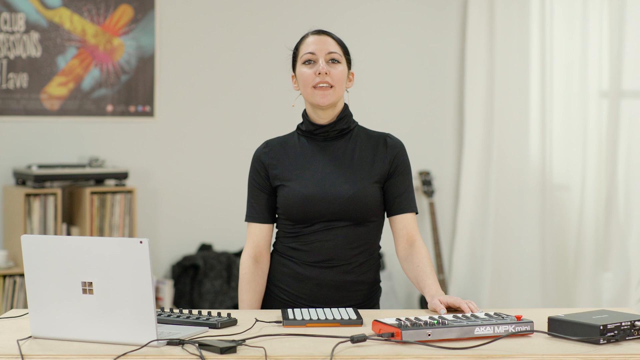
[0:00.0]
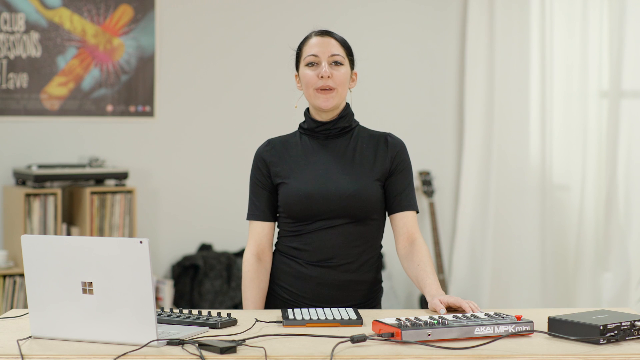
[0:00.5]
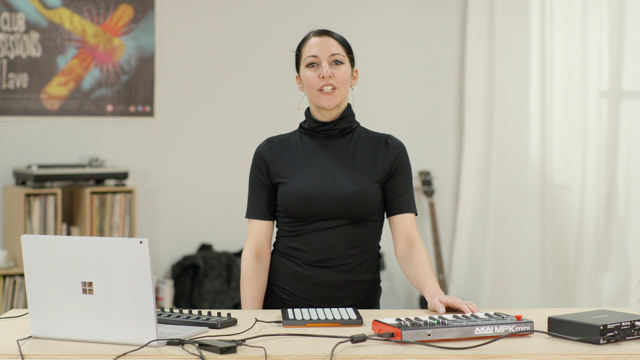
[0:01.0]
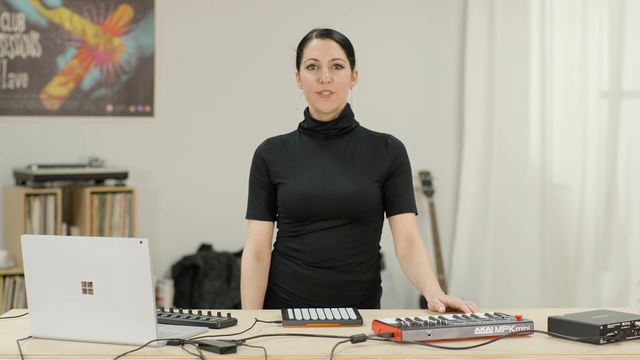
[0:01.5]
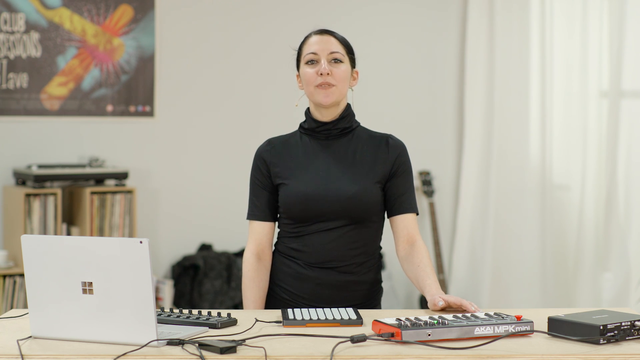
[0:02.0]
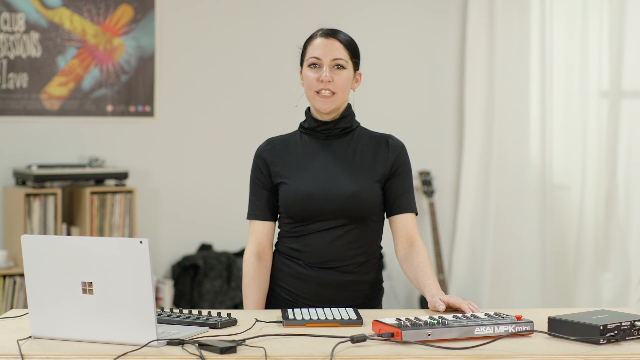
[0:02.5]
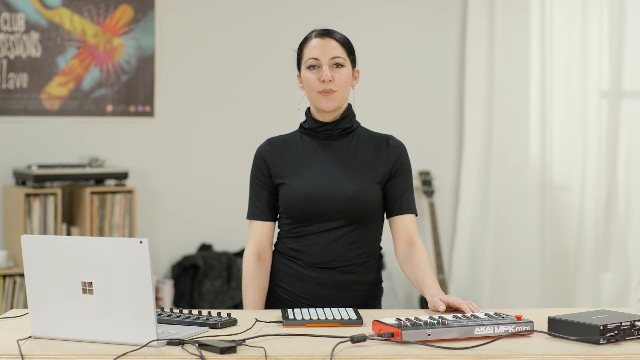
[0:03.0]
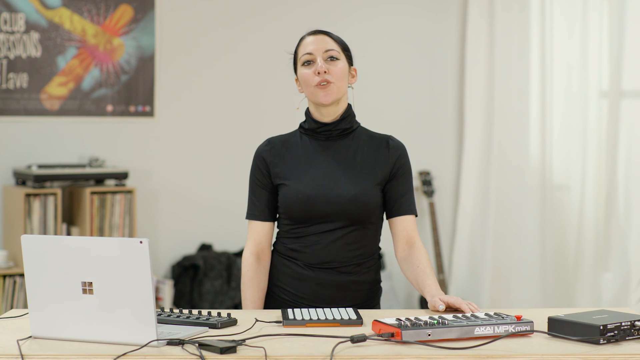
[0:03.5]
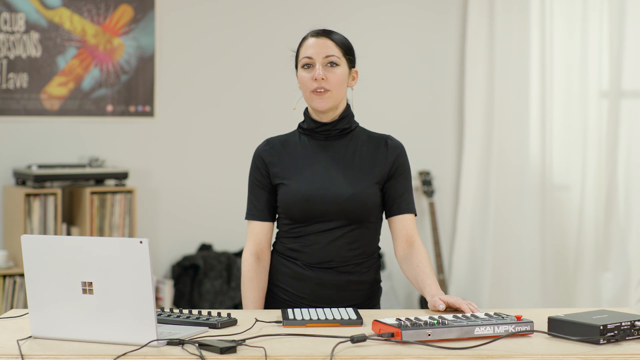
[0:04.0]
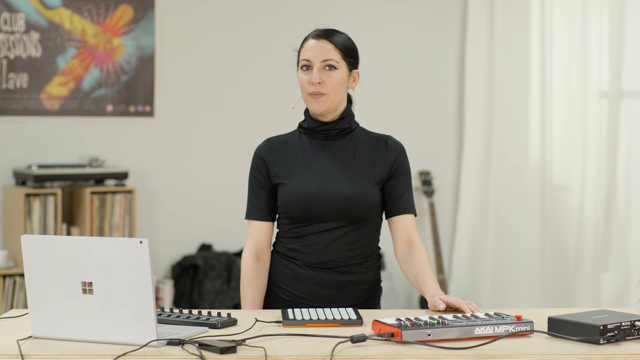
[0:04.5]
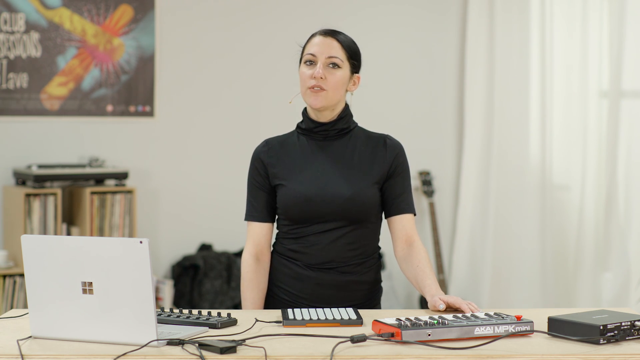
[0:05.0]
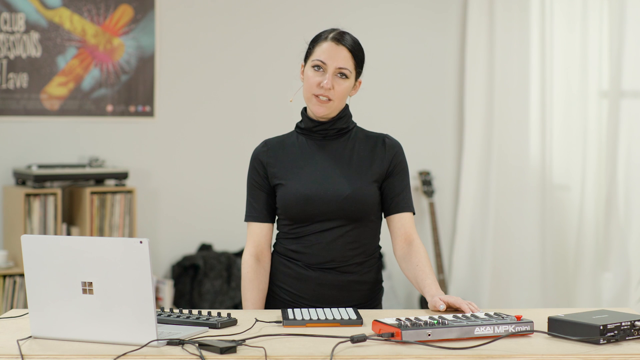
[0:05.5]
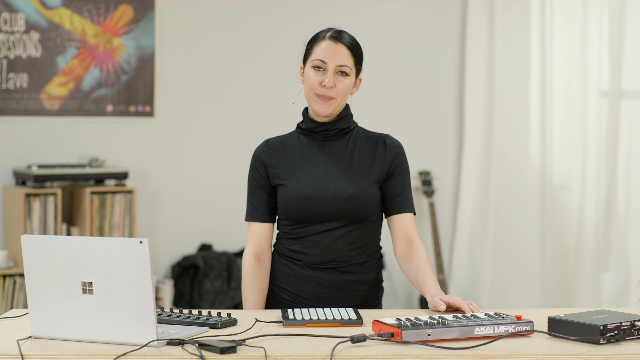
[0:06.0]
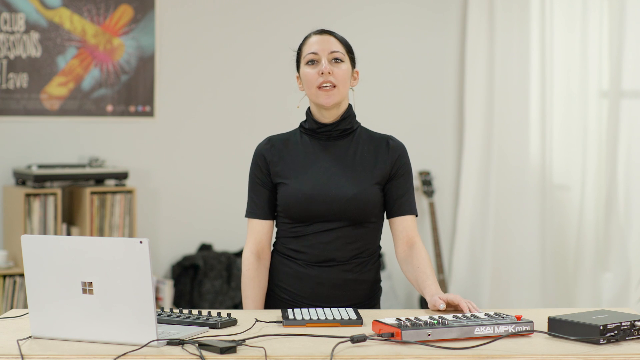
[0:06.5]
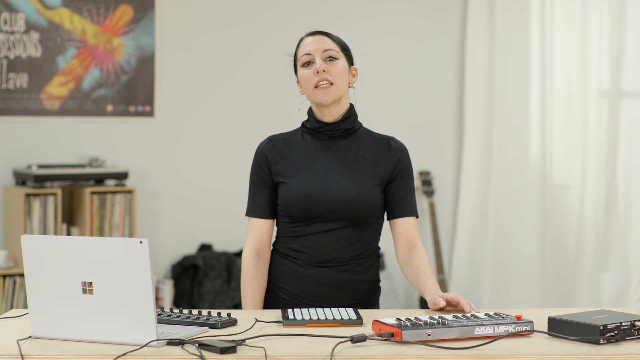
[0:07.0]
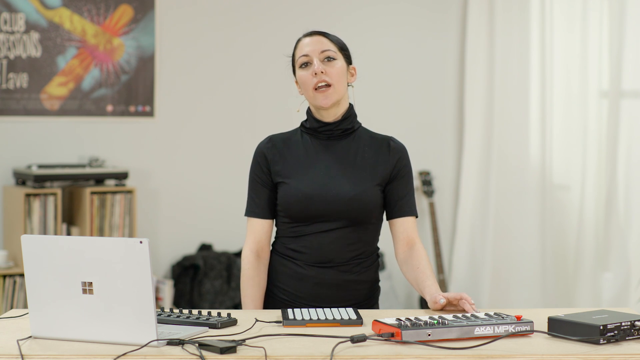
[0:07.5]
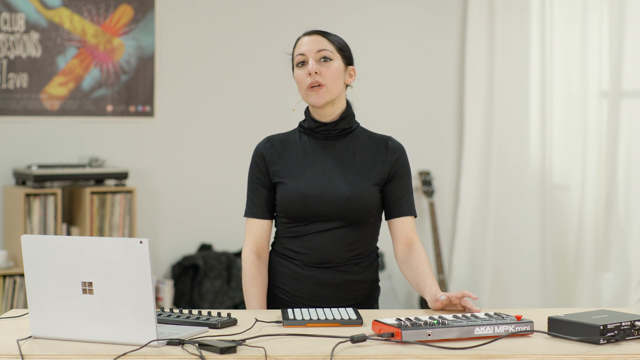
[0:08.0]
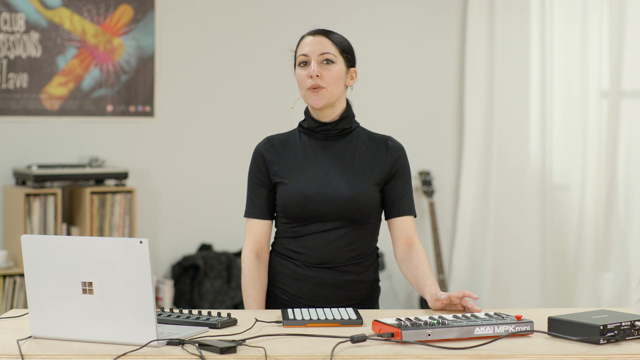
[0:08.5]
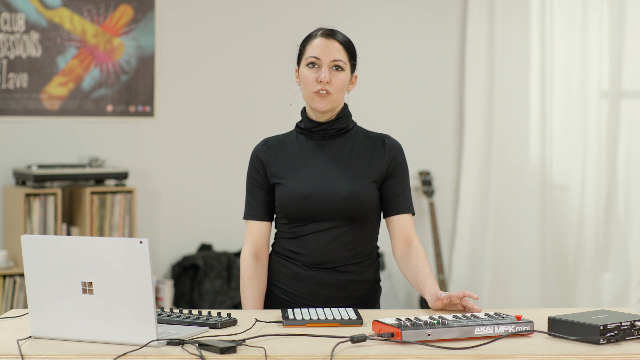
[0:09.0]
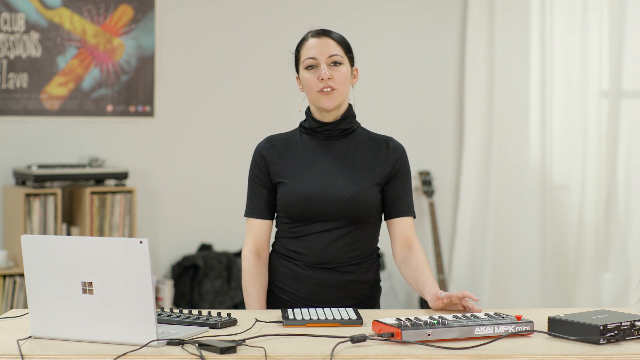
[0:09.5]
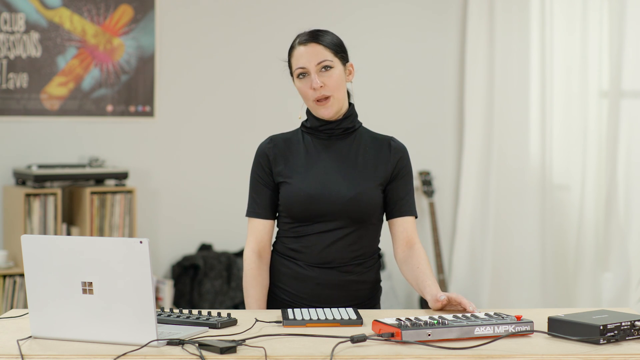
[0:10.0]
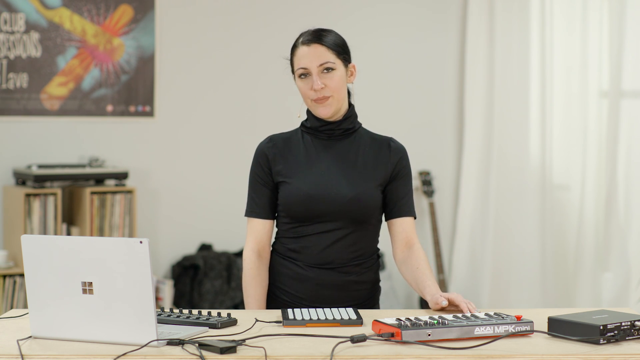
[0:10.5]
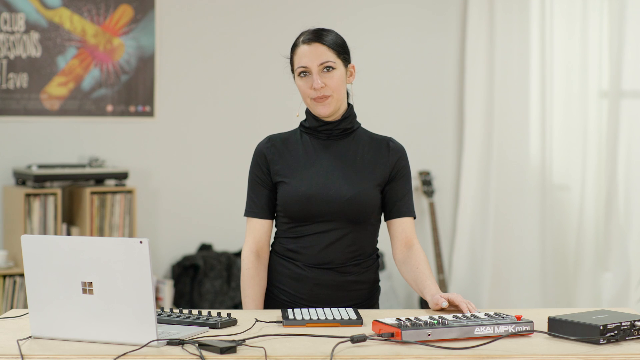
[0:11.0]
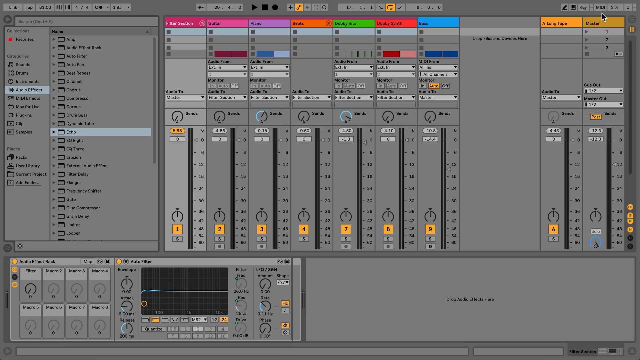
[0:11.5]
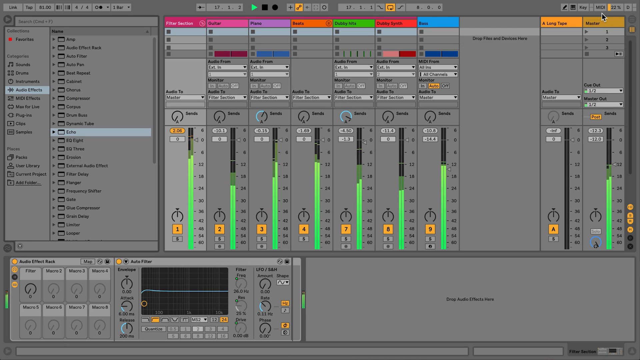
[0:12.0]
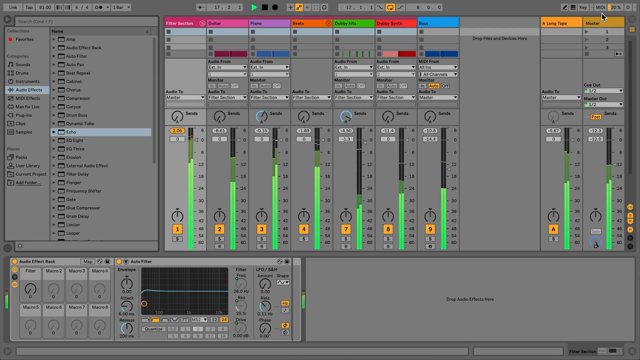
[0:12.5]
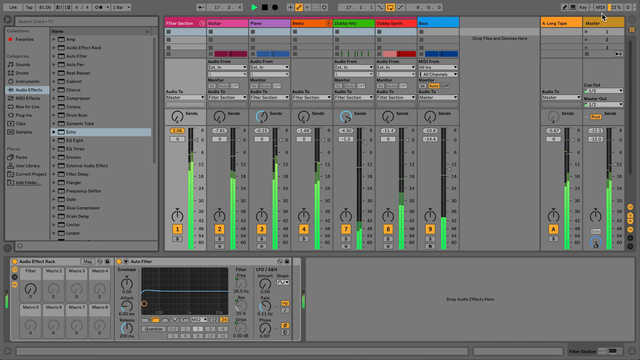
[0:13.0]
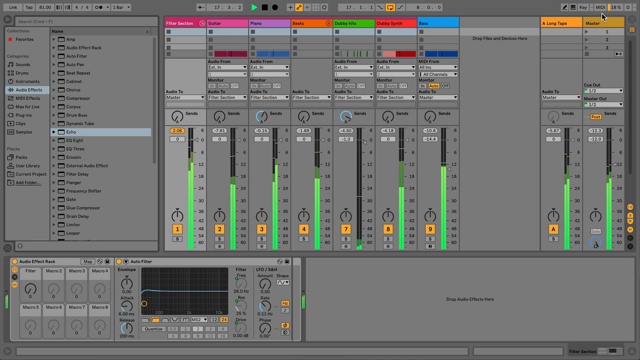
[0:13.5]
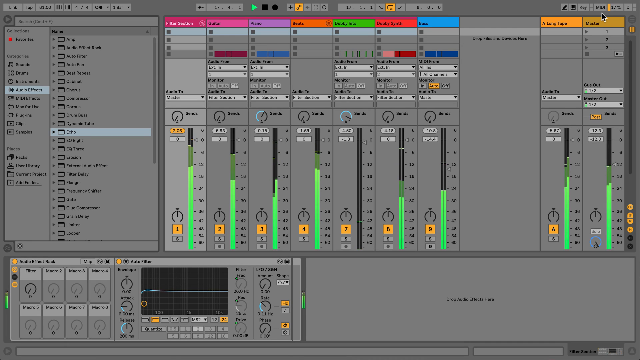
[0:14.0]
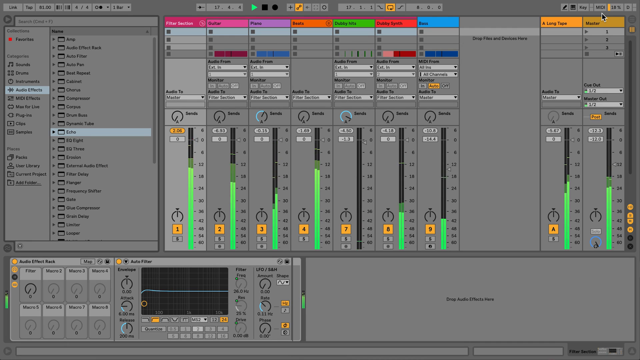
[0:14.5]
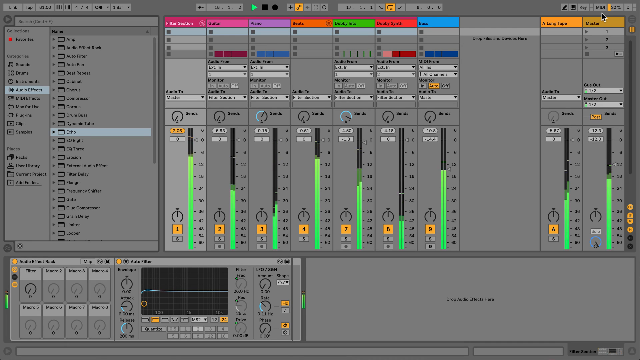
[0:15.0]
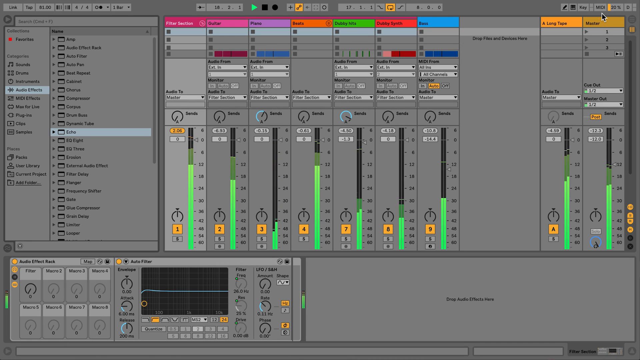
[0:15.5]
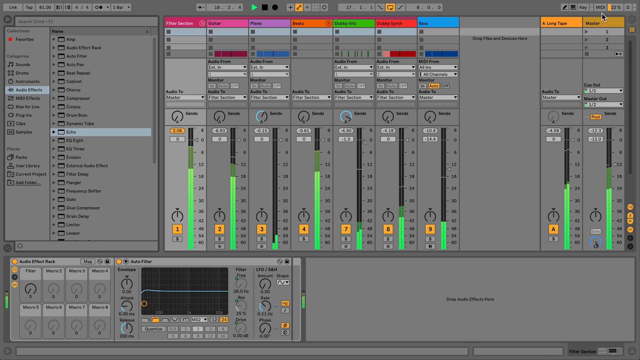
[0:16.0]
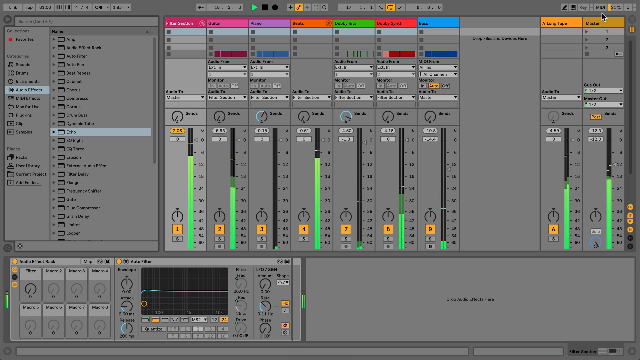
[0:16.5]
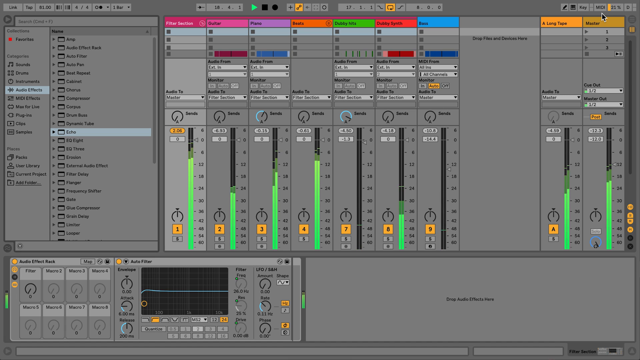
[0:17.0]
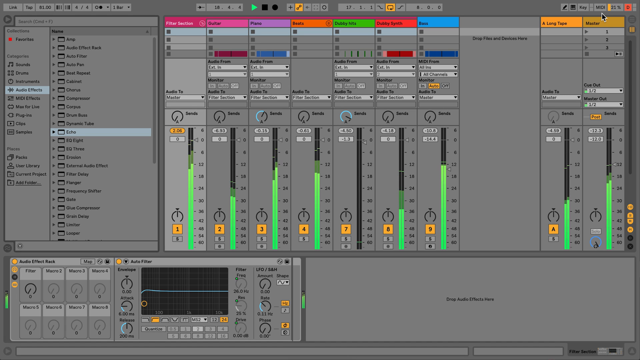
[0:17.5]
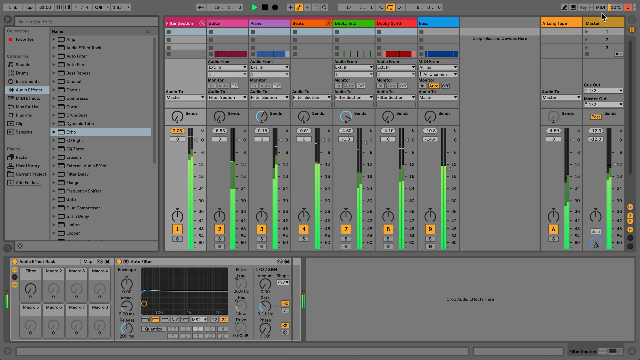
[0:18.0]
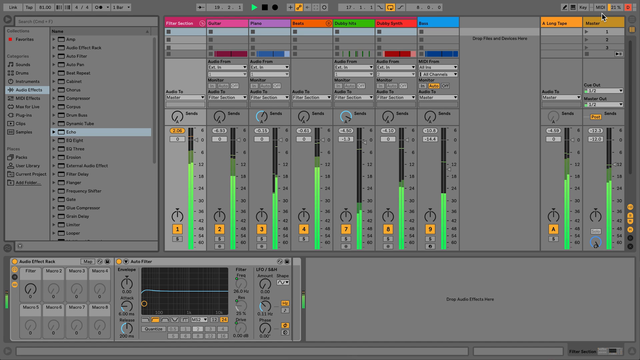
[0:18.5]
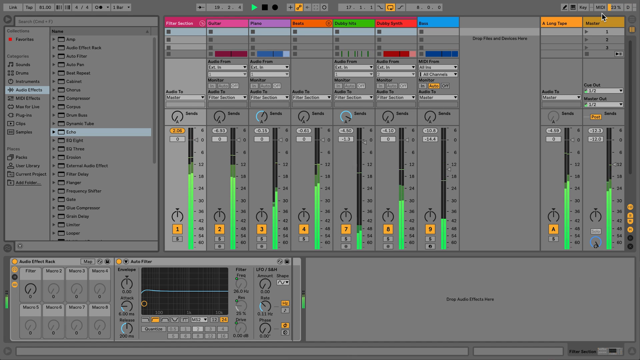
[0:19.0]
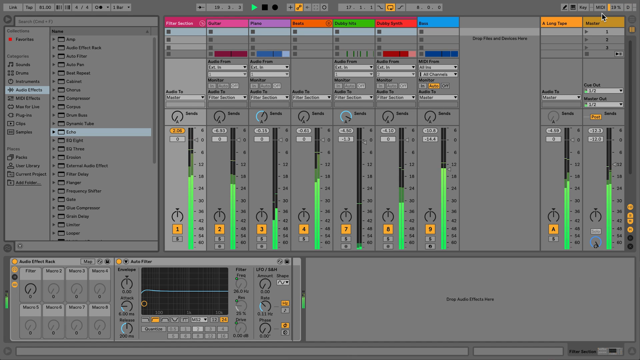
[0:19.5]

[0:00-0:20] A woman stands in front of a table, wearing a black short-sleeved turtleneck shirt. On the table is a white computer with four pieces of equipment plugged into it. The one to the right is a black box with white writing on top. Next is an Akai MPK Mini with multiple buttons and levers, mostly gray, plus a red button. Directly in front of her is a device that appears to be gray with a yellow border and has rows of white buttons. Finally, another device, sort of obscured by the computer, has multiple levers and dials. Behind her is a white wall; to the right on the wall are curtains that suggest a window behind her. A guitar is leaning on the wall or sitting in a guitar holder, there appears to be a black bag or duffel behind her, and there is a white bottle. There are shelves holding albums with a record player sitting on top, and a photo with a black background hangs on the wall. In the bottom right corner are multiple social media handles, with a blue object, two objects that are sort of crossed, and perhaps an airplane in yellow, pink and red. Her left hand lies open on the desk with the fingers spread apart, while her right hand is not visible, below the table, as she speaks. This might be a lesson or how-to video. The video then cuts to a computer application showing a mixing board, with multiple channels and inputs; green lines show the inputs and levels, indicating that it is receiving data from different devices.